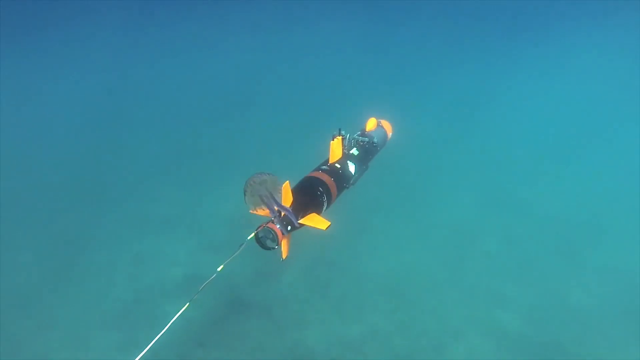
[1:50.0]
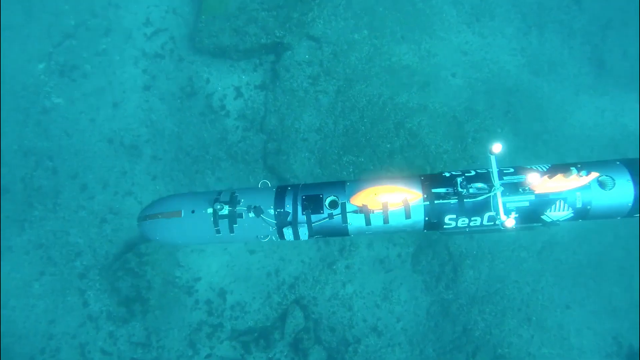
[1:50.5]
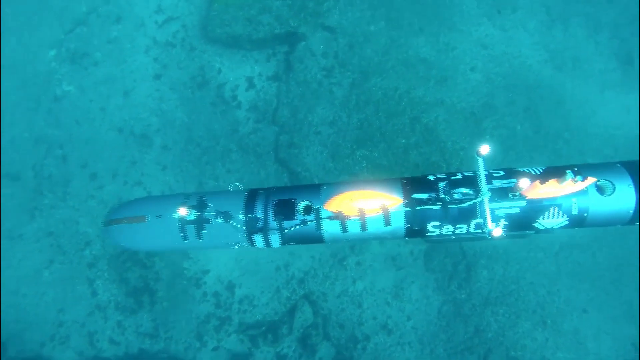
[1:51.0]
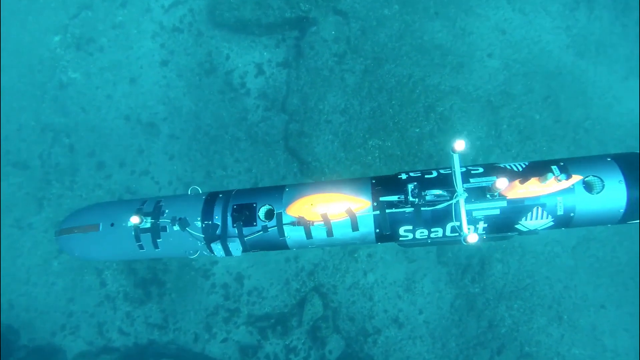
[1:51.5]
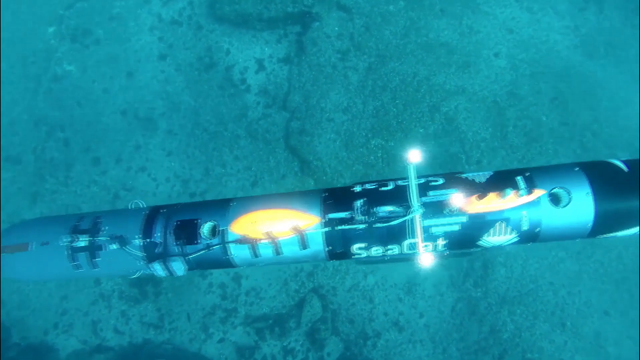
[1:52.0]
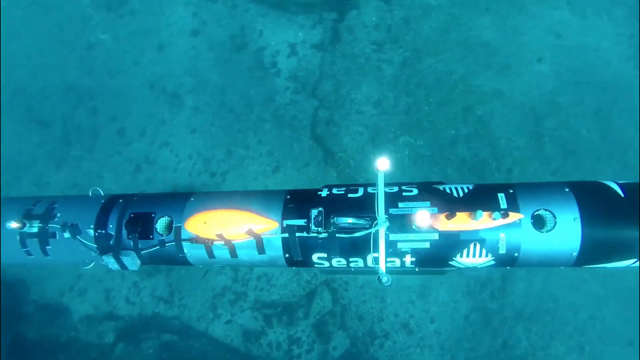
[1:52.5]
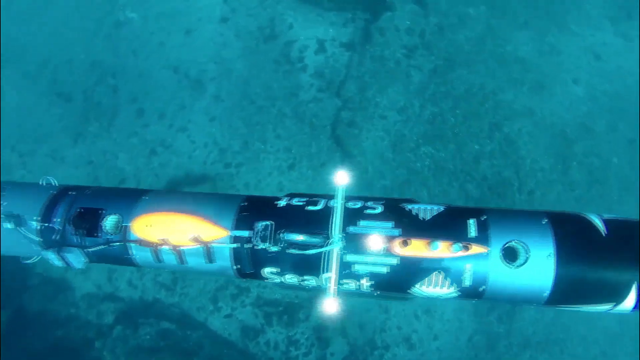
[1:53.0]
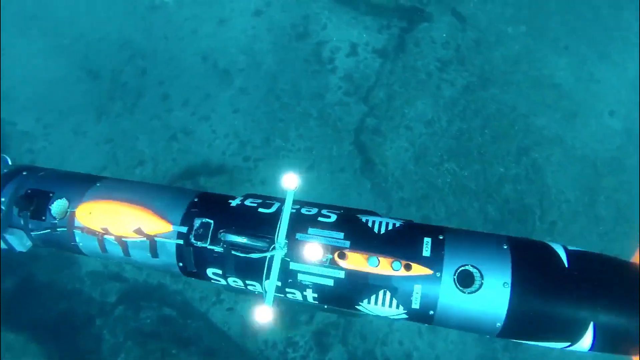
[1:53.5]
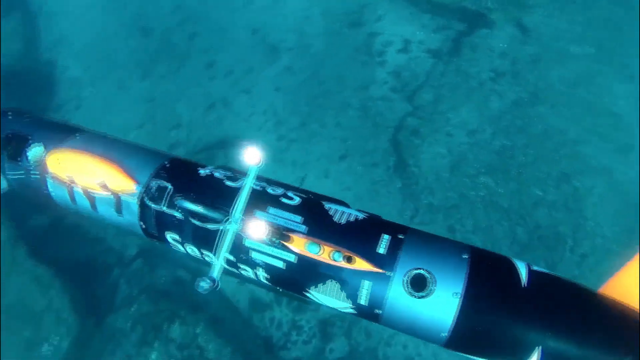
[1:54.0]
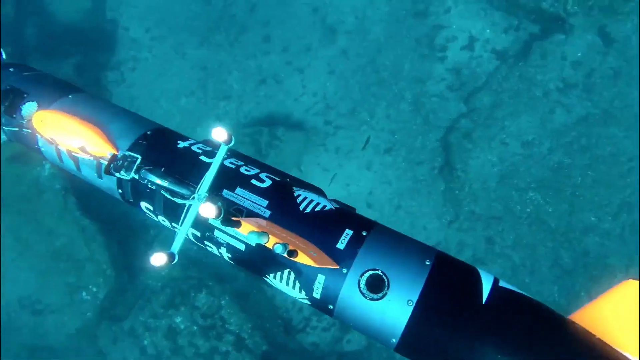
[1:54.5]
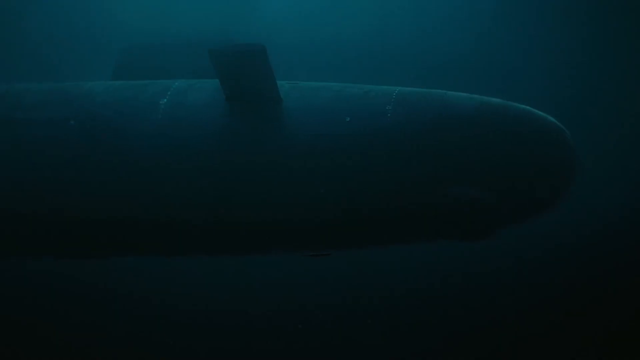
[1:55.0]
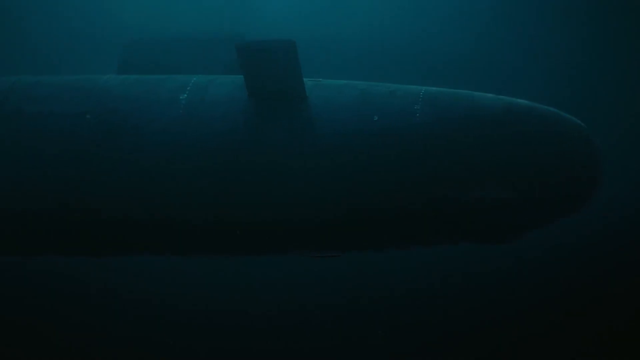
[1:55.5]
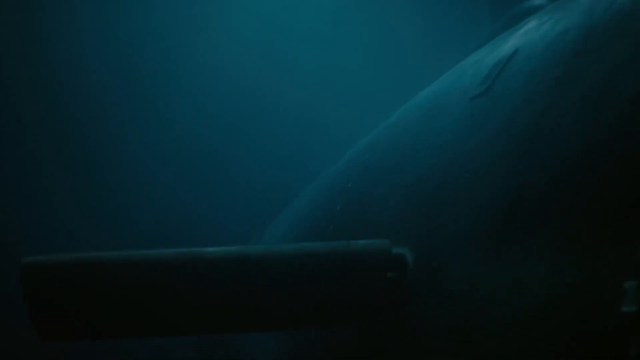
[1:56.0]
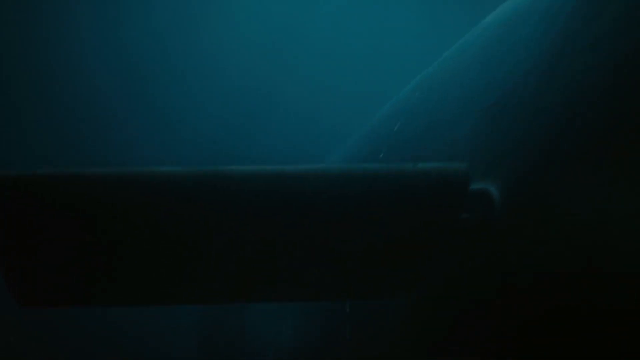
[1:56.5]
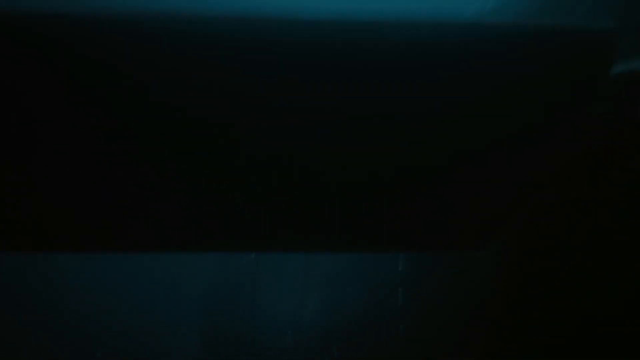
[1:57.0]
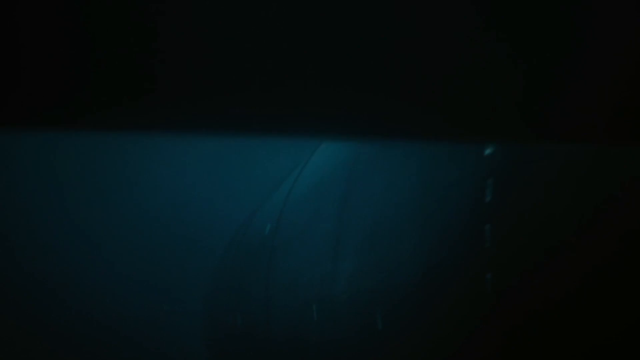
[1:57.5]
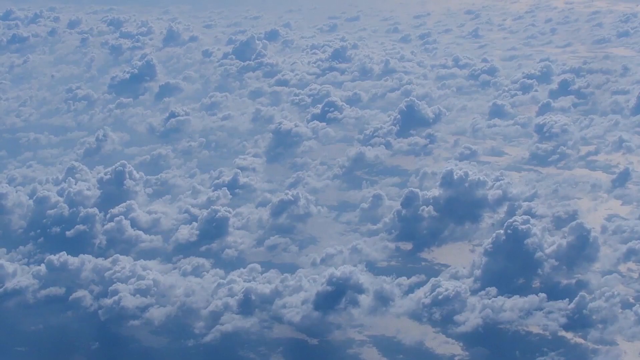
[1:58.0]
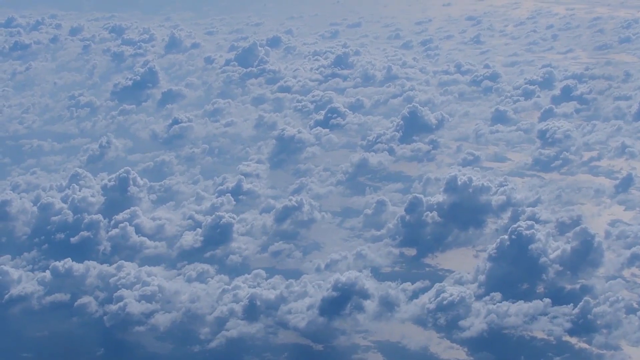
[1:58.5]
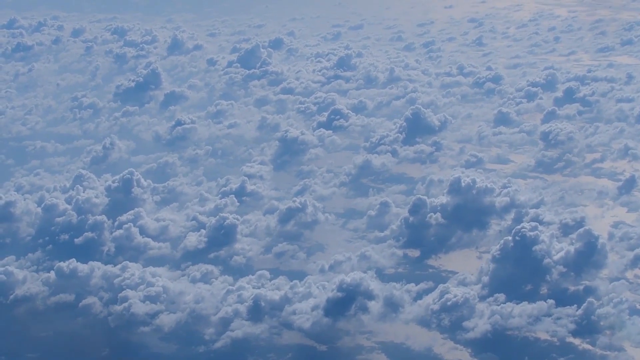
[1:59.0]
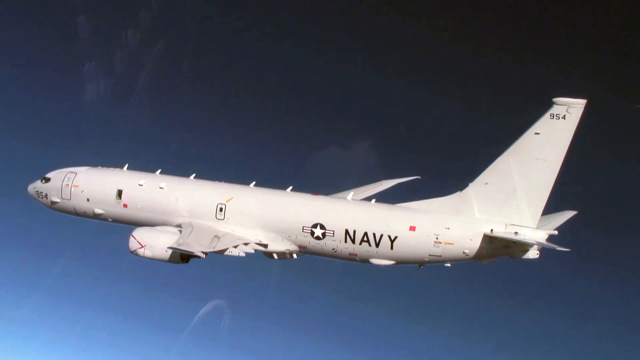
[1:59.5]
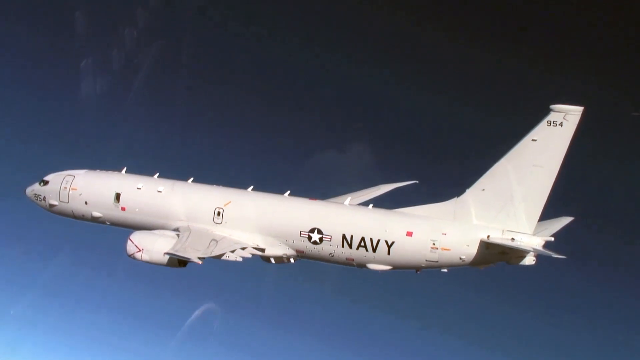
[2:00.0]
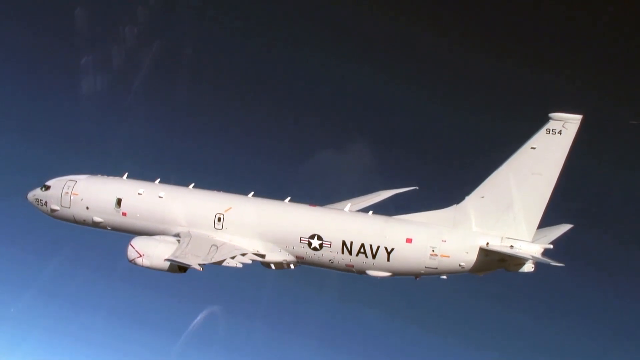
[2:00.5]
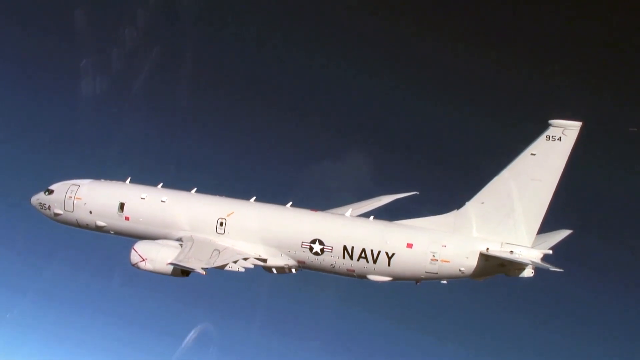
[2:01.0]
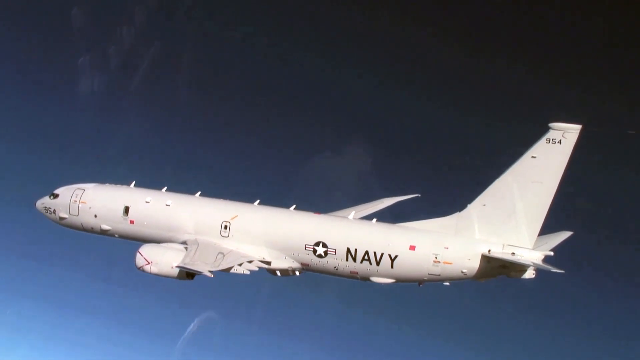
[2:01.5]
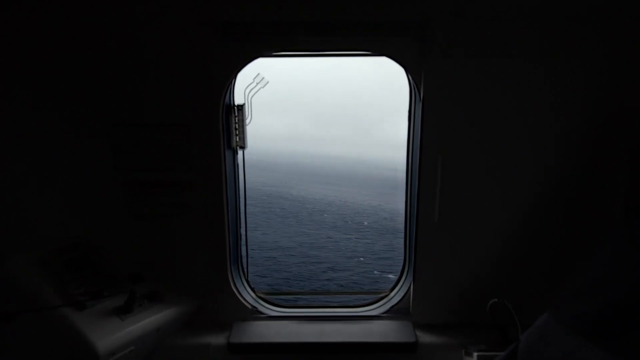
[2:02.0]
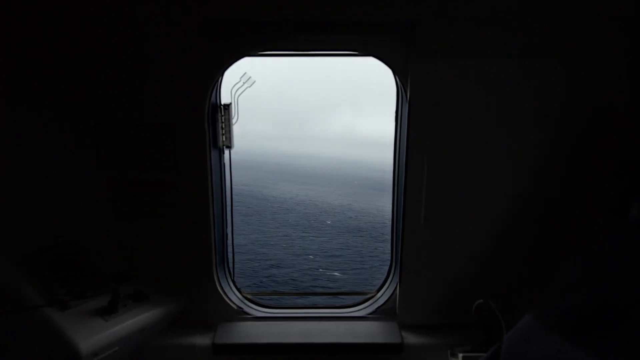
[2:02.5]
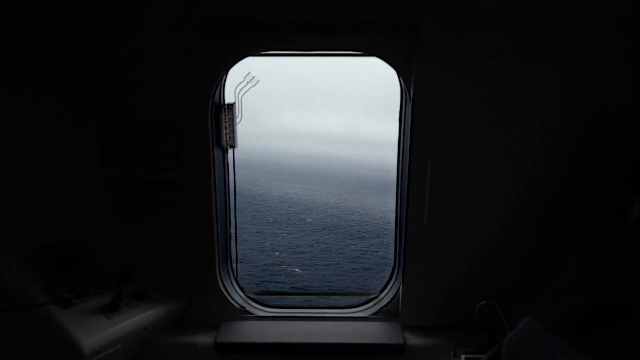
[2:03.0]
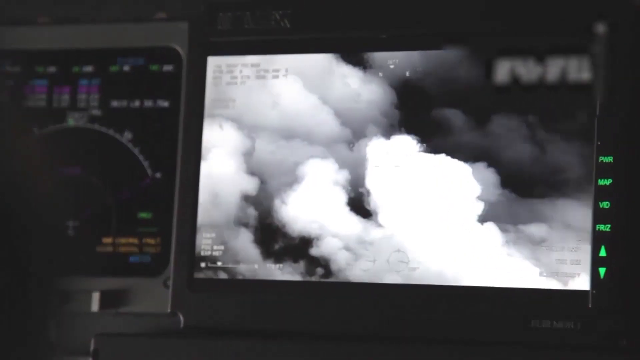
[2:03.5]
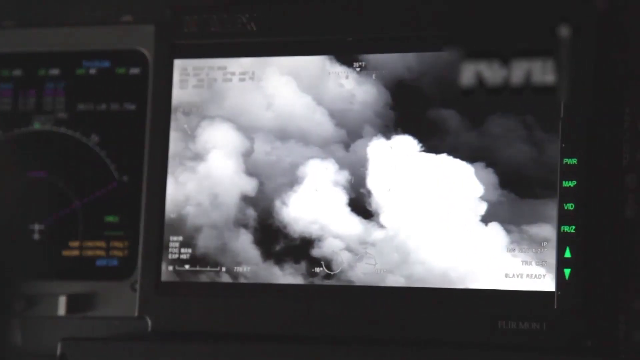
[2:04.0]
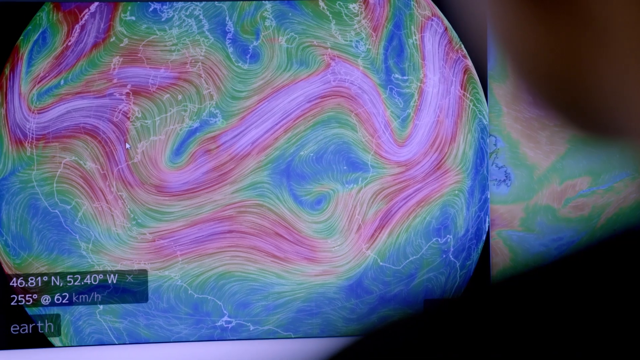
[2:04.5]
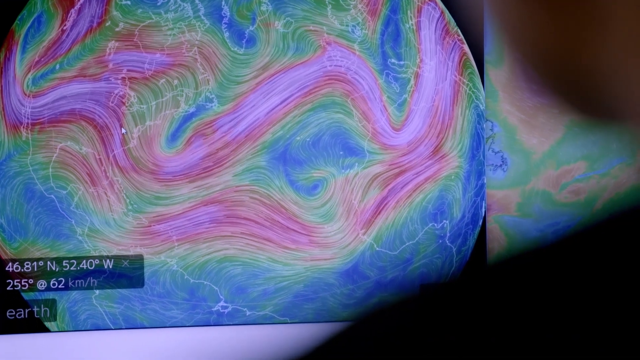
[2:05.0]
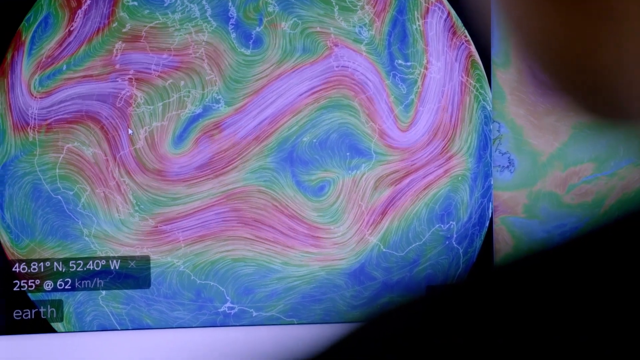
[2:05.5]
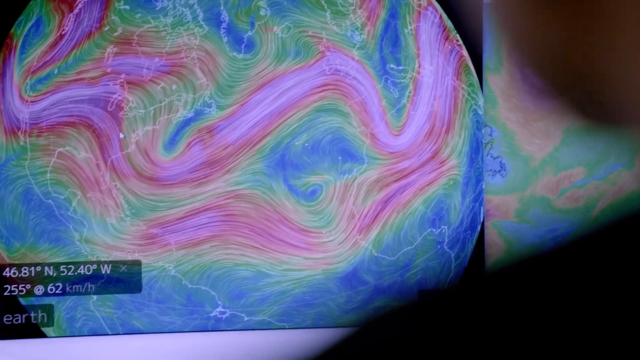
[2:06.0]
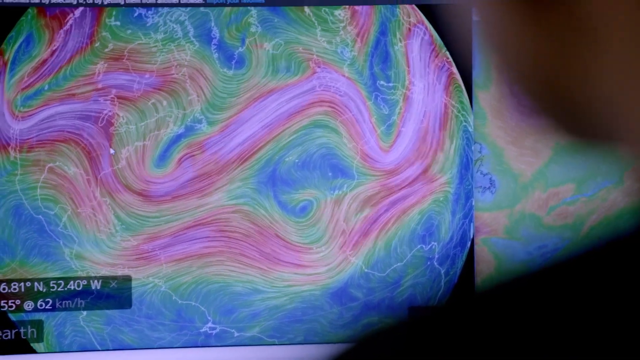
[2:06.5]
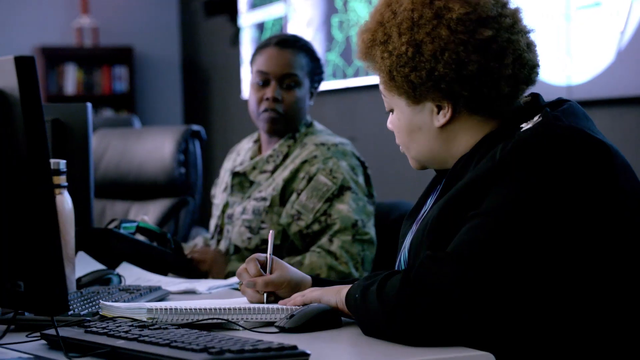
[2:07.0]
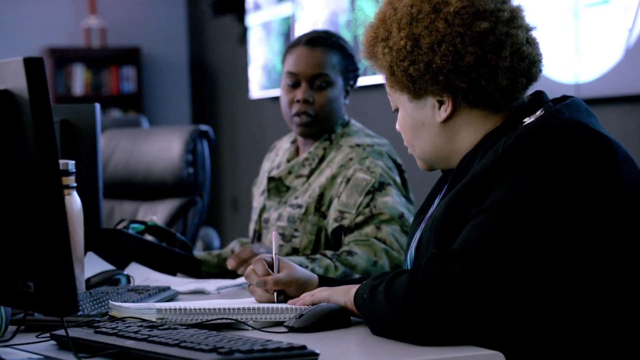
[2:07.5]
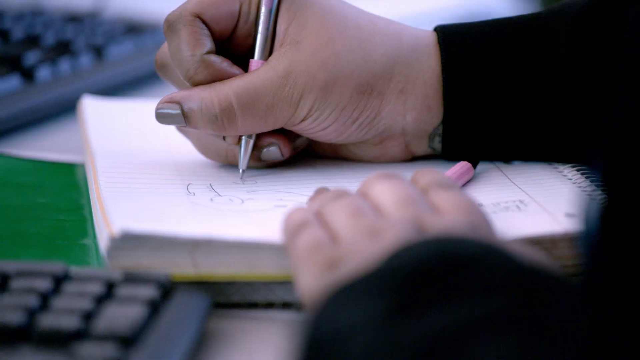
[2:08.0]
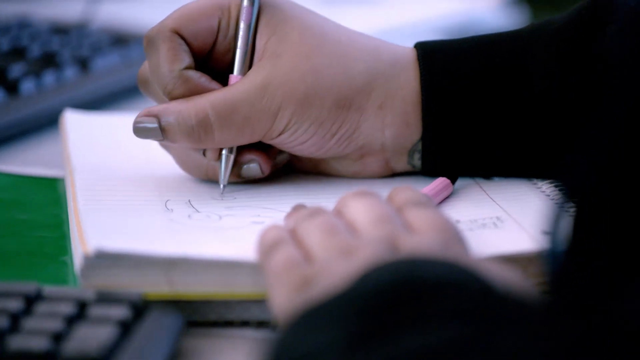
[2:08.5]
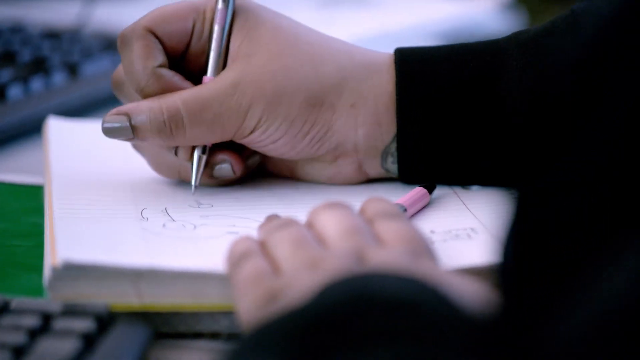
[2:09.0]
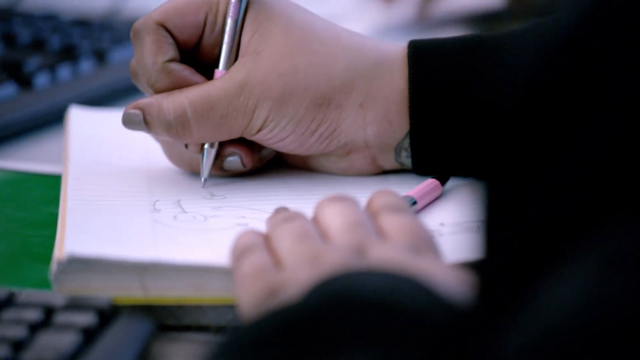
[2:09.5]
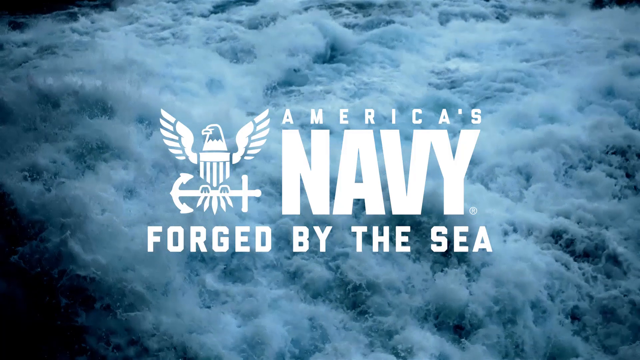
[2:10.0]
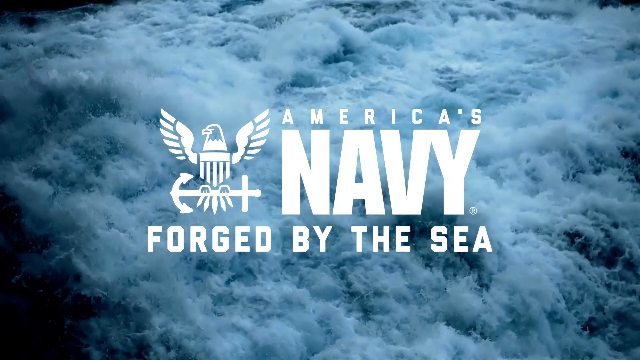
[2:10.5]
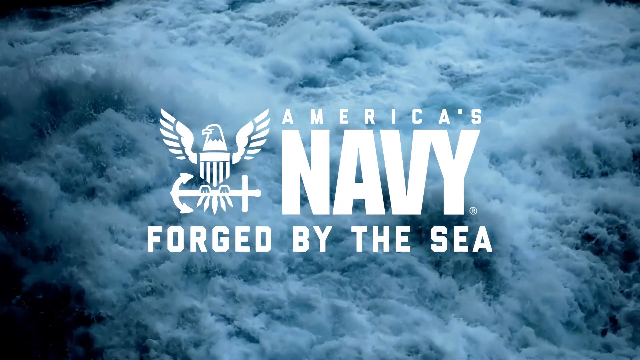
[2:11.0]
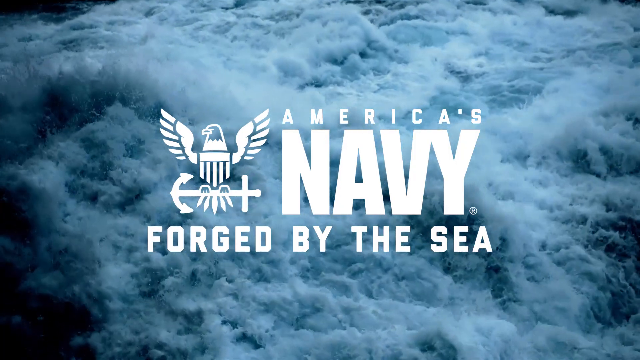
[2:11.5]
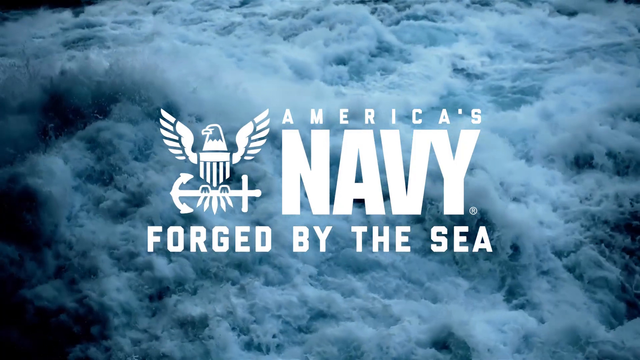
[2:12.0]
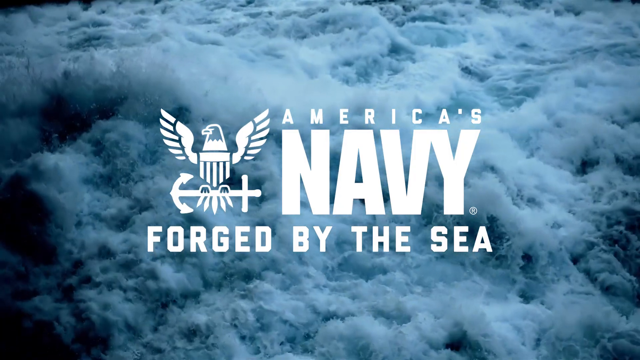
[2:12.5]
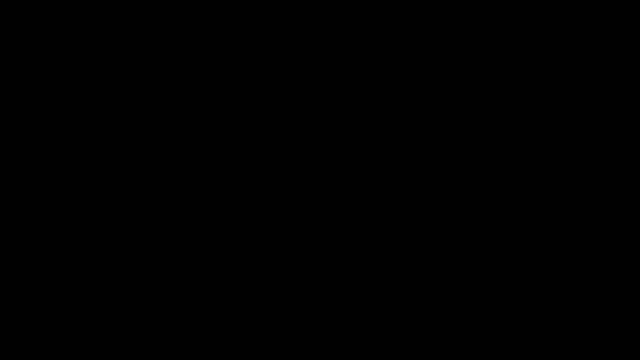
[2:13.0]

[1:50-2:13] A missile is shown underground with lights on it that seem to flash. Clouds fill the sky, and a white plane with "Navy" on it appears. Women look at weather models on computers. White text on the missile reads "Seacat." Aboard the Navy plane, people look at weather patterns that appear to show many hurricane systems, and those discussing them write notes in a white notebook; the woman writing wears beige fingernail polish. The video ends with the text "America's Navy forged by the sea" and the Navy logo. The video seems to be about the Navy forecasting weather trends.